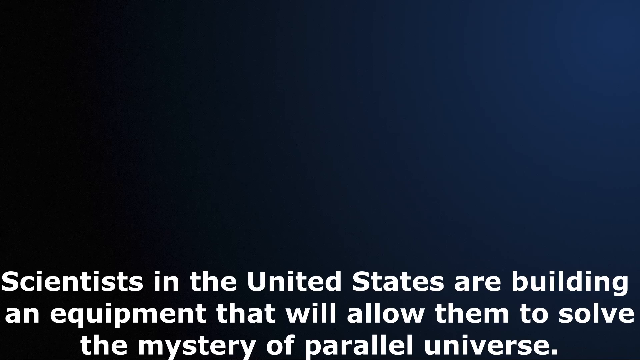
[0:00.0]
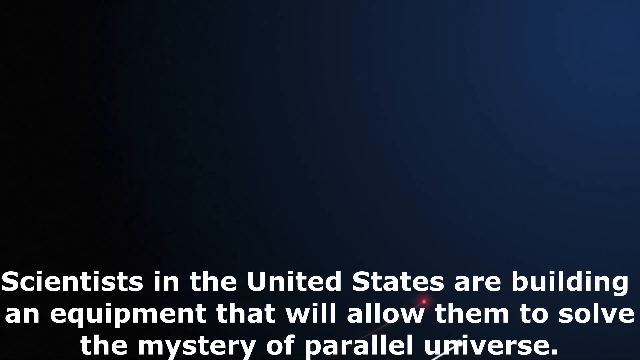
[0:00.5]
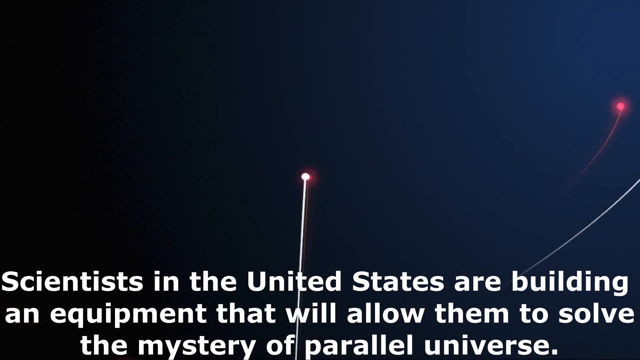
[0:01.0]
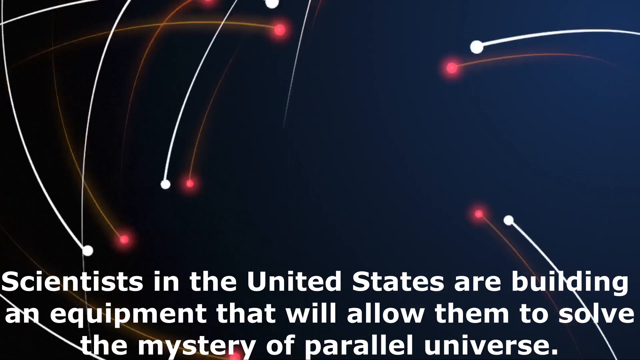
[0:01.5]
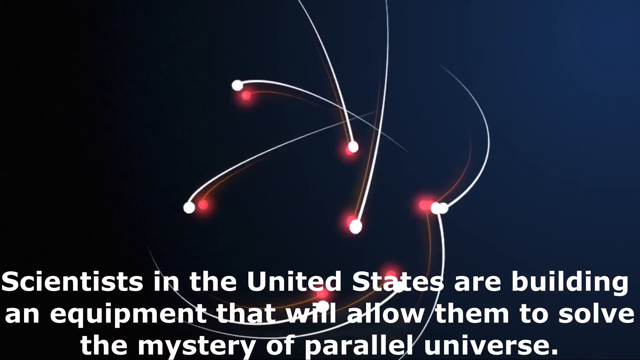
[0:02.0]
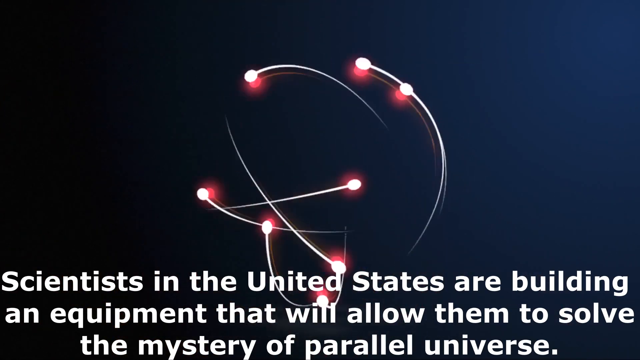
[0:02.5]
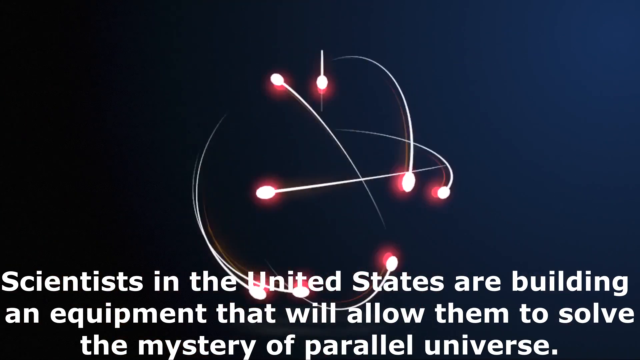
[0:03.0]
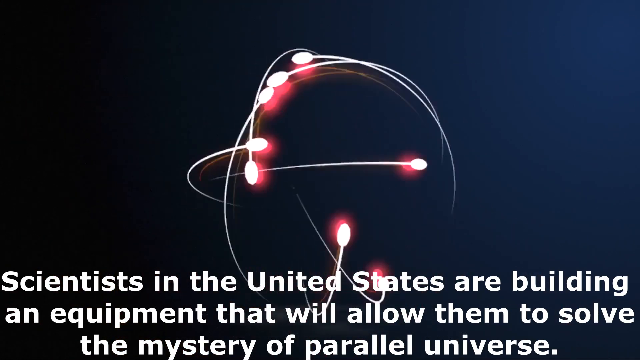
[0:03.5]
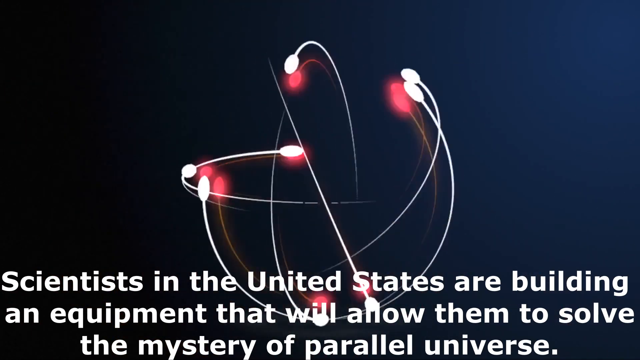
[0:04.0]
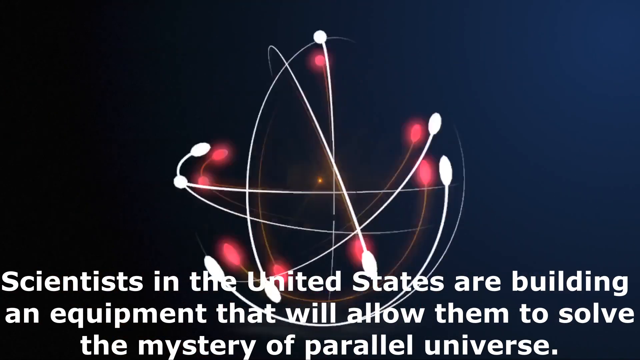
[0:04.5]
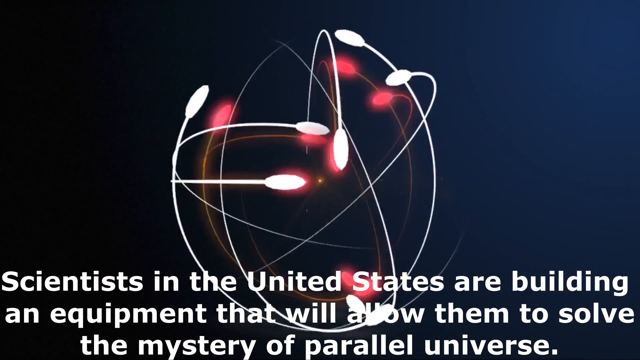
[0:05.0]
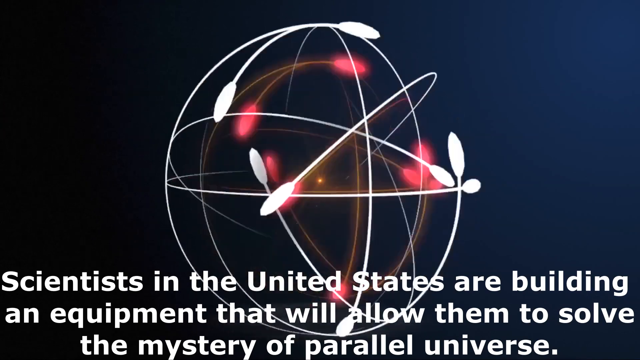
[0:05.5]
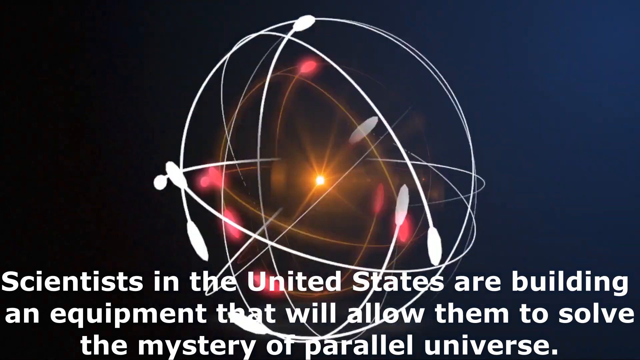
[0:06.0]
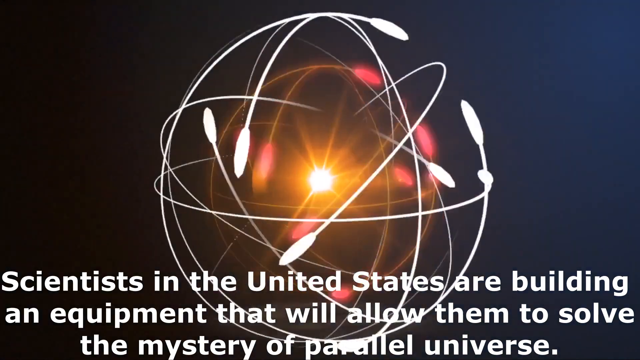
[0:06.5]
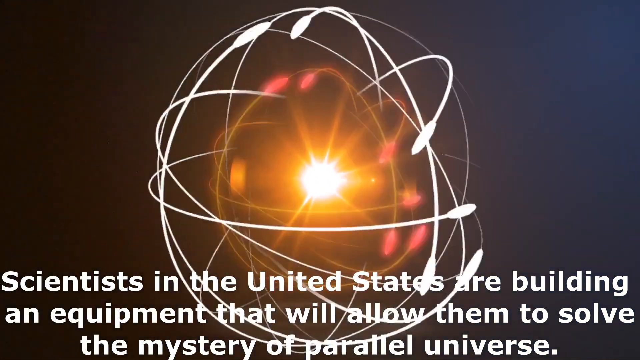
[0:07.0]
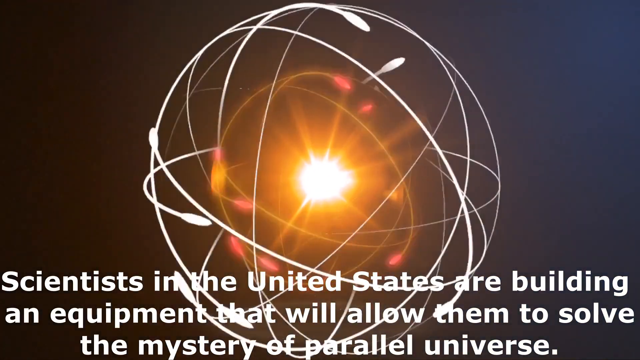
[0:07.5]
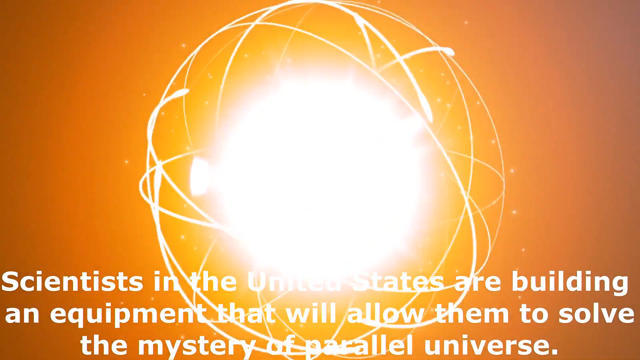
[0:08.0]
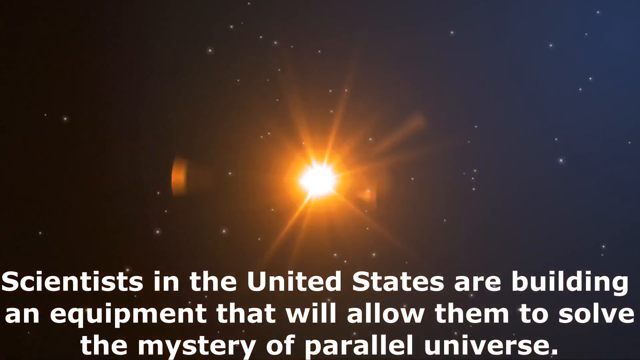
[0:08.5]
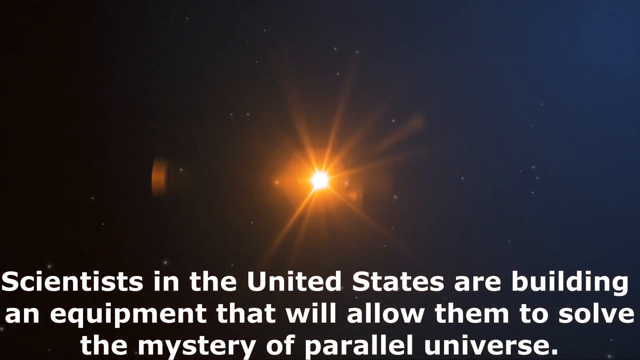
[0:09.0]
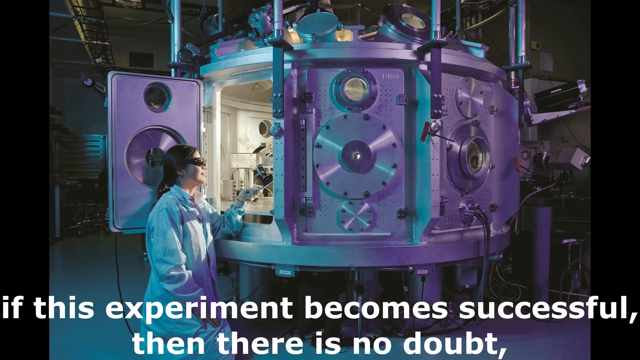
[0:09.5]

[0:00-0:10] The background is dark blue, with the left side a darker shade of blue than the right. White captions at the bottom read: "scientists in the United States are building an equipment that will allow them to solve the mystery of parallel universe." In the middle, a whole bunch of white lines spin around, forming a circle-like structure like a globe. A bright yellow light then appears in the middle and grows very intense and bright while the white lines continue to circle around it. The light gets very large and then shrinks.